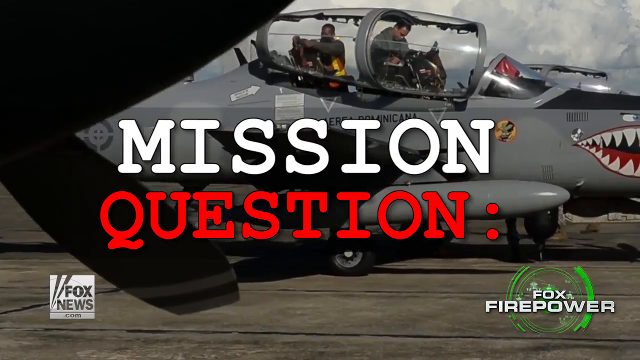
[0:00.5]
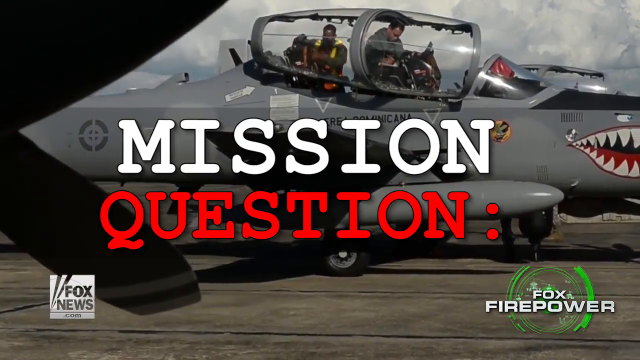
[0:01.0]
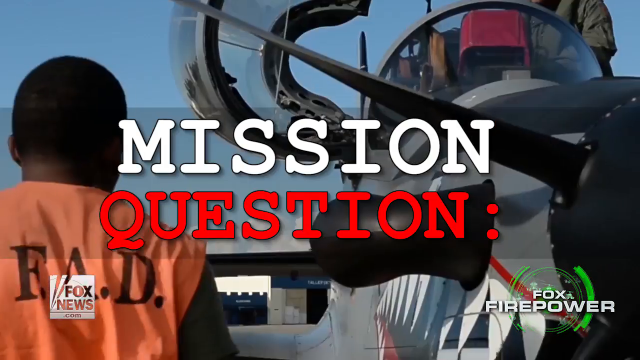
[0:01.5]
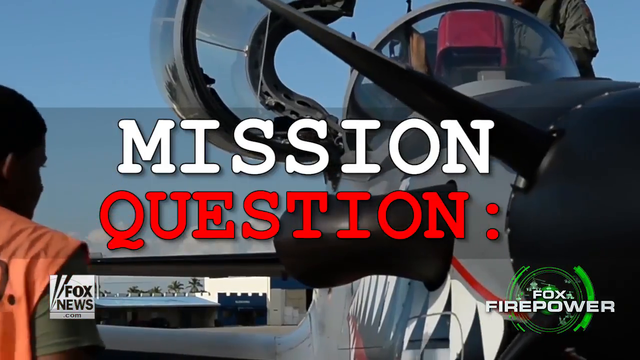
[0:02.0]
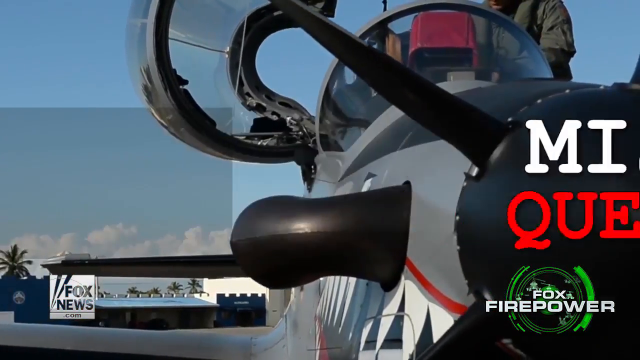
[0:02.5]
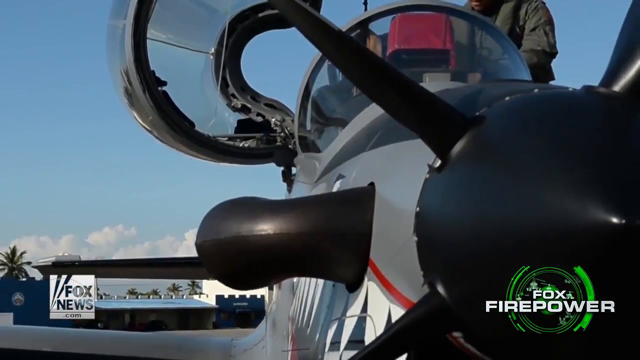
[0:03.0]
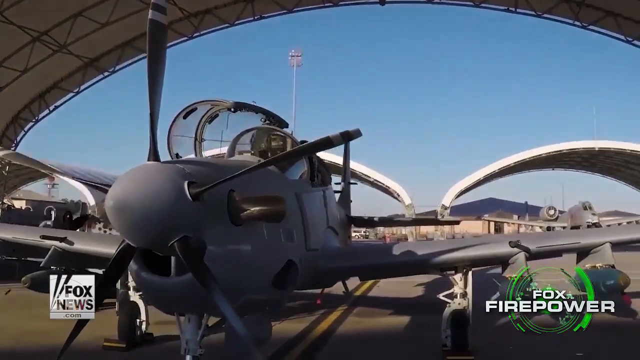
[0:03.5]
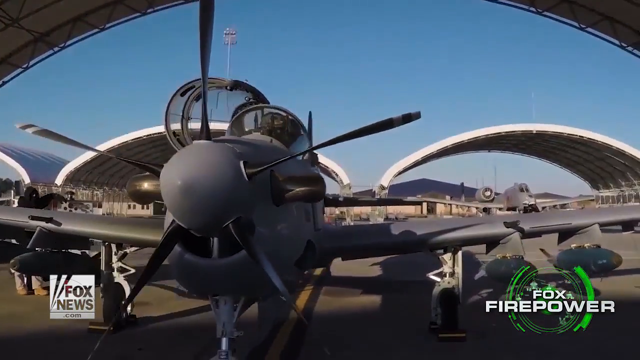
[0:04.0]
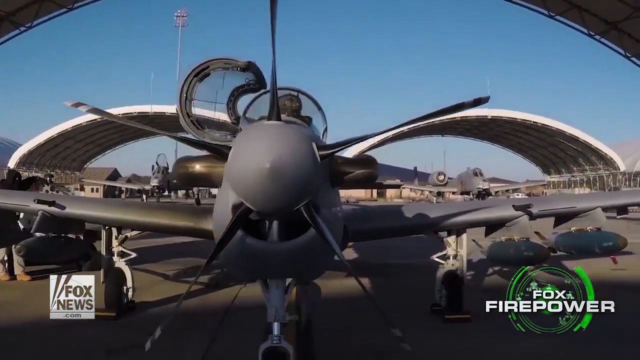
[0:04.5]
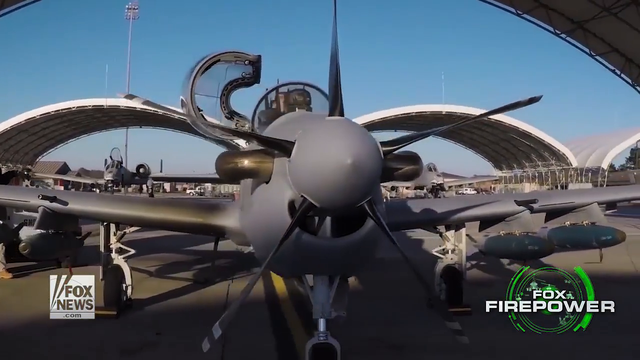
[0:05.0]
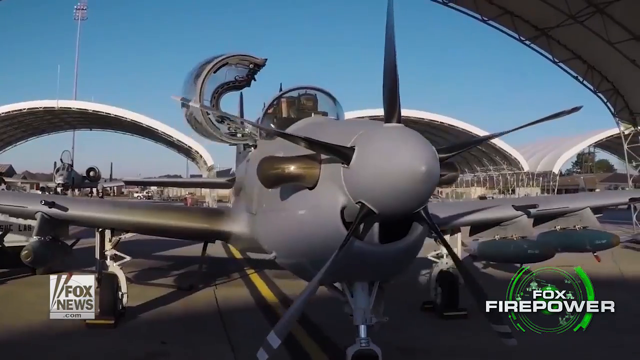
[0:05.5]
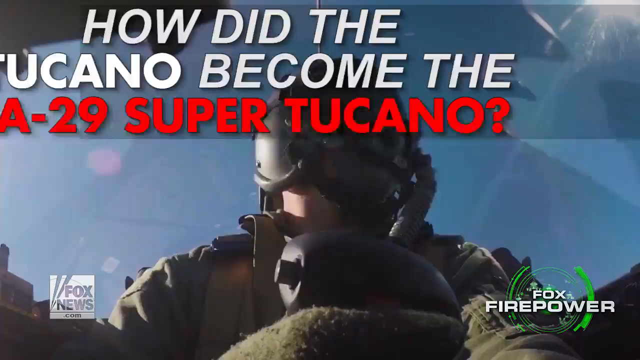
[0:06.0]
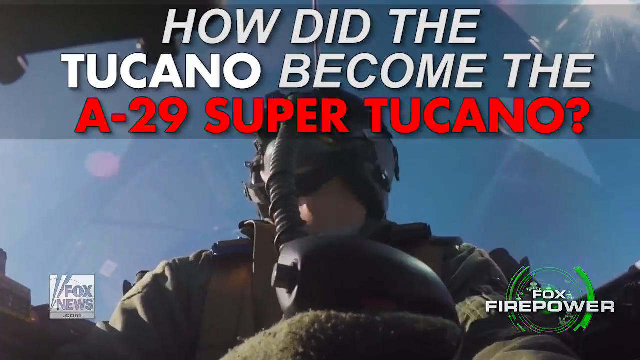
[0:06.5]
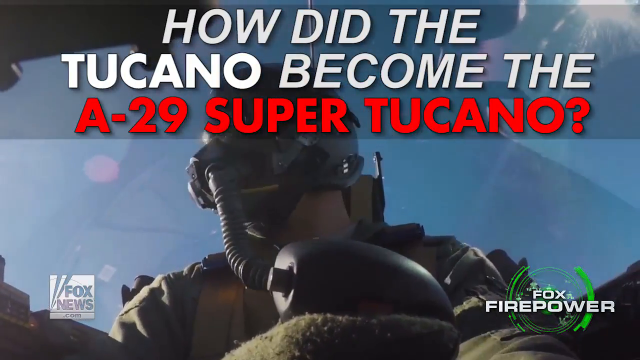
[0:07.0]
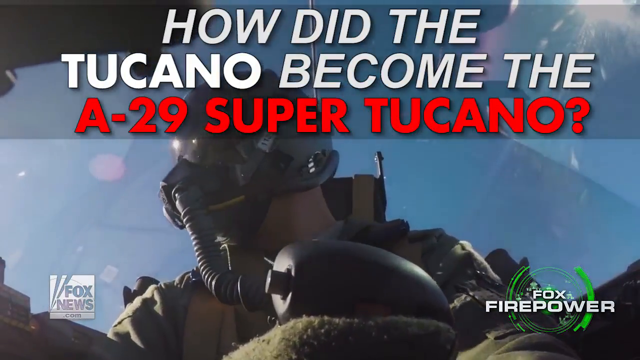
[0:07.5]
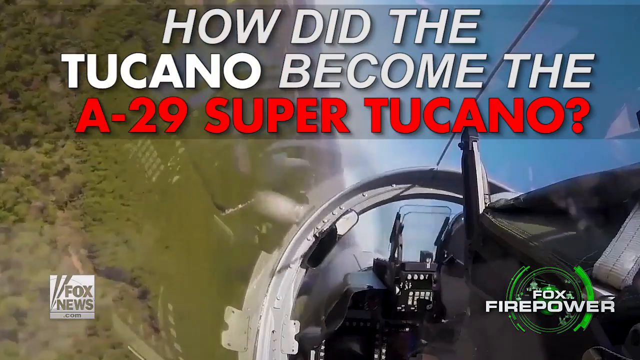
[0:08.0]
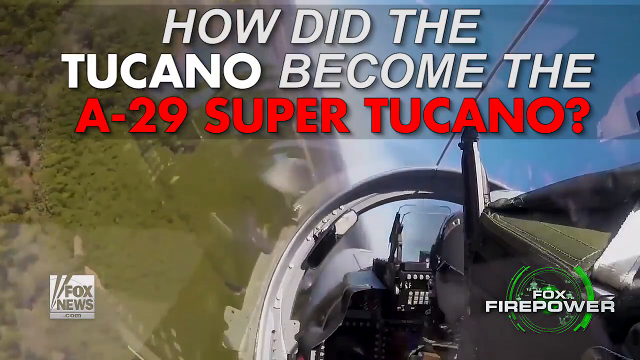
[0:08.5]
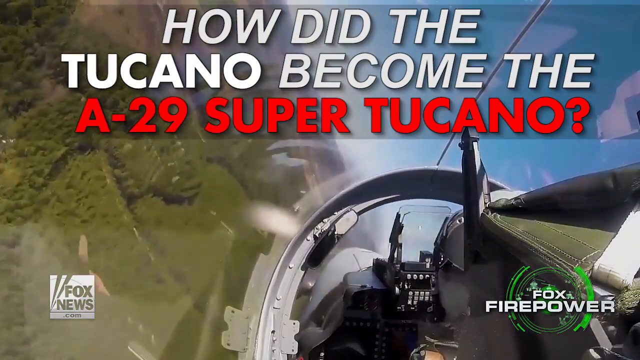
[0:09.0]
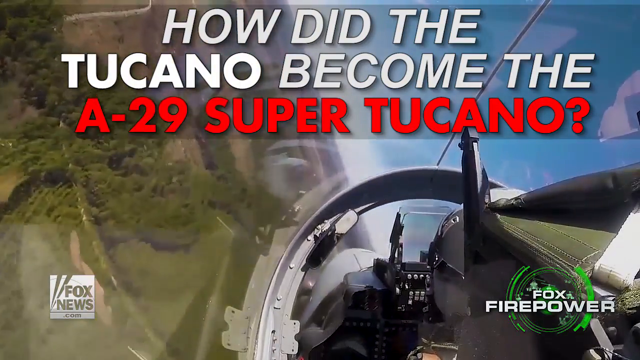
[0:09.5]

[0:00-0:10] The opening segment is called mission questions. The footage looks 3D, like a game, and the aircraft in particular looks game-like. Text on the screen includes "foxnews.com" and a line that apparently reads "how did the … become the a29 soprano". Some men are on the plane, and they also seem to fly it. The view moves to someone else flying, then to an aerial view of the plane and the land. The plane is gray, and its fans are black. The men look like they are on a mission and planning to go somewhere. It is a very big plane that looks well equipped, and an engineer at the back of the plane is trying to fix it up before the pilots start to fly. The text "foxnews.com" and "foxfire power" also appears.